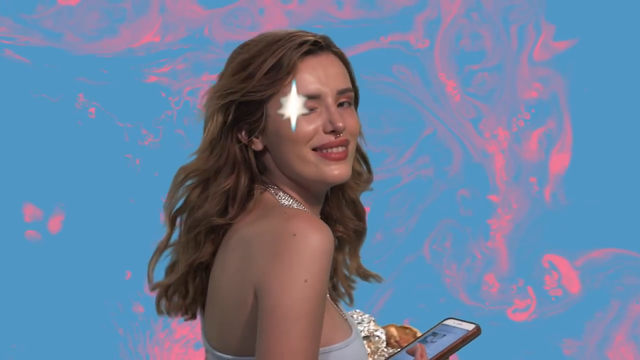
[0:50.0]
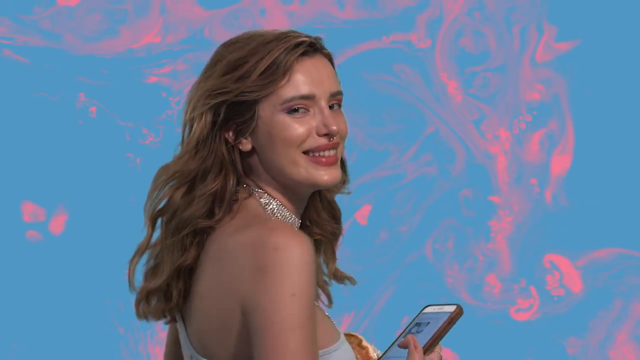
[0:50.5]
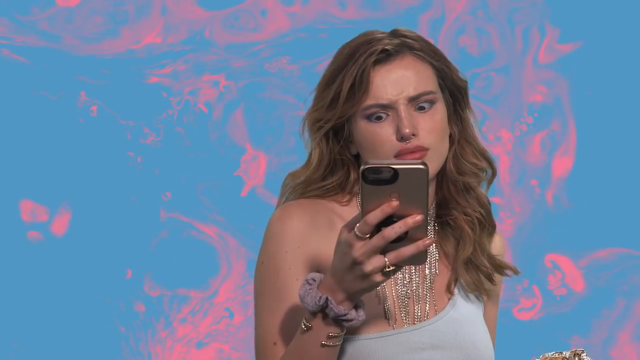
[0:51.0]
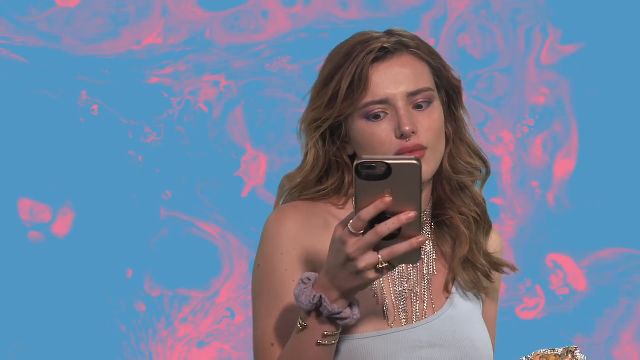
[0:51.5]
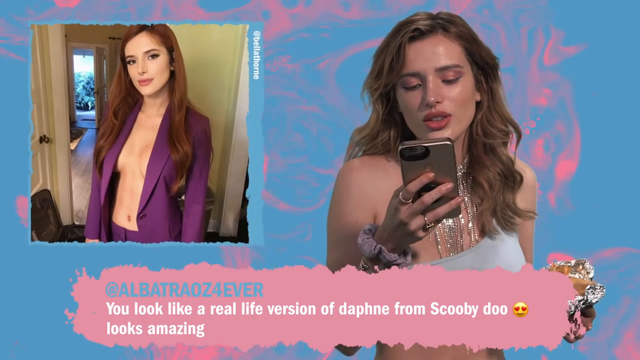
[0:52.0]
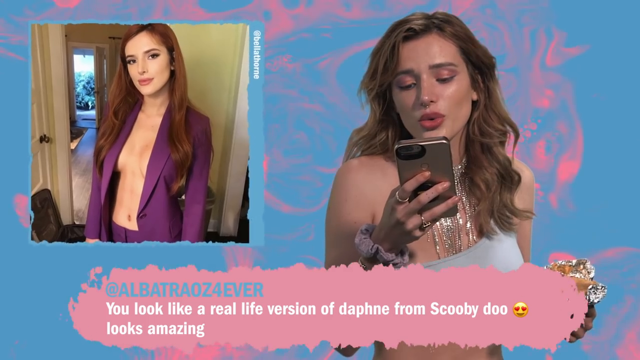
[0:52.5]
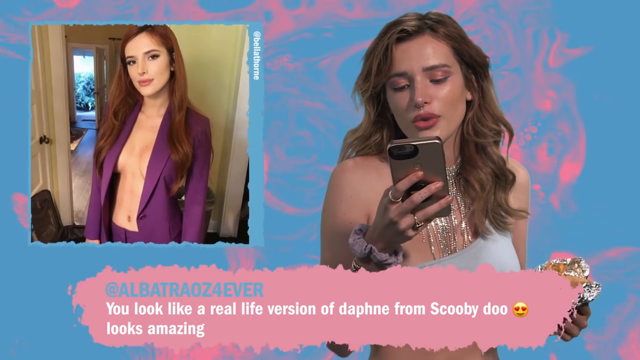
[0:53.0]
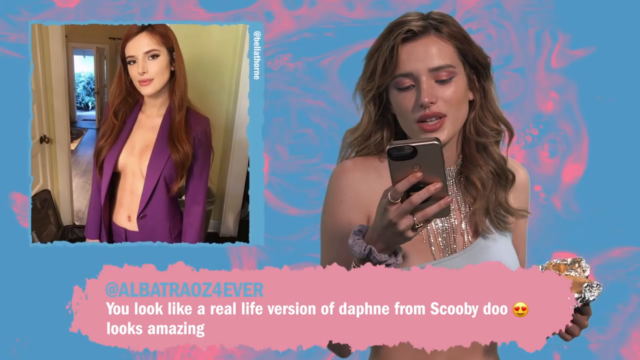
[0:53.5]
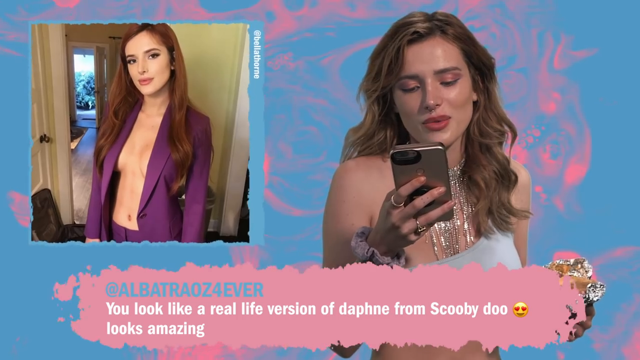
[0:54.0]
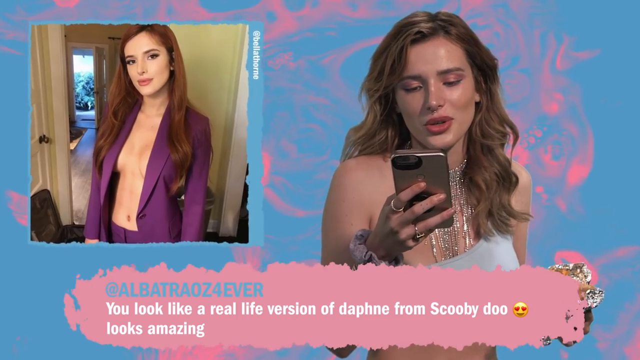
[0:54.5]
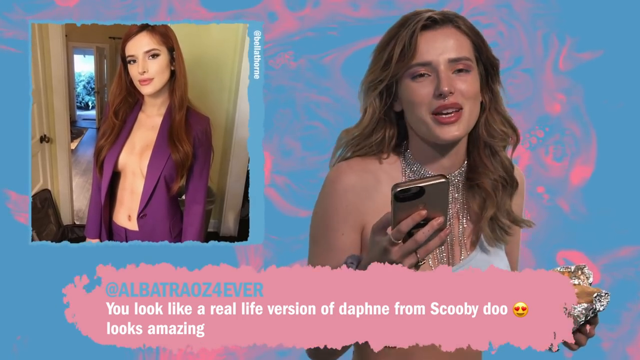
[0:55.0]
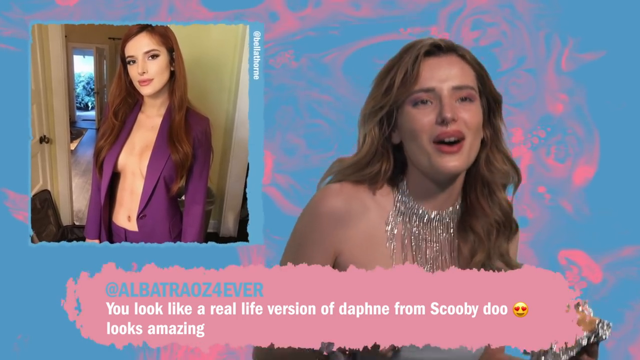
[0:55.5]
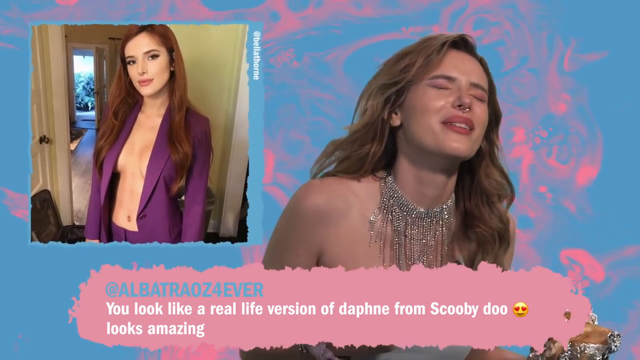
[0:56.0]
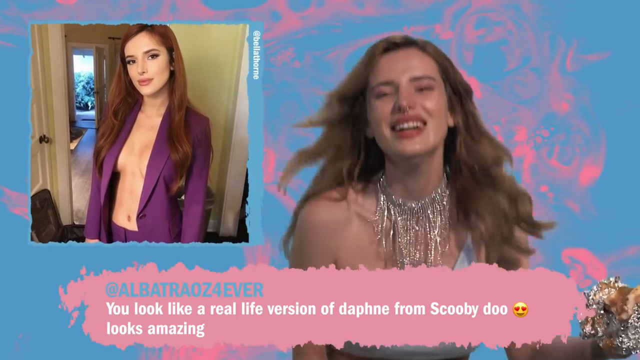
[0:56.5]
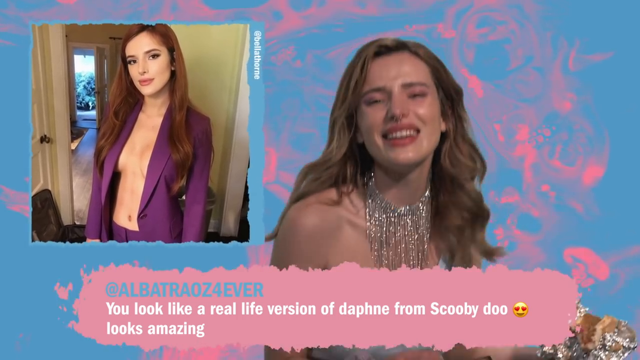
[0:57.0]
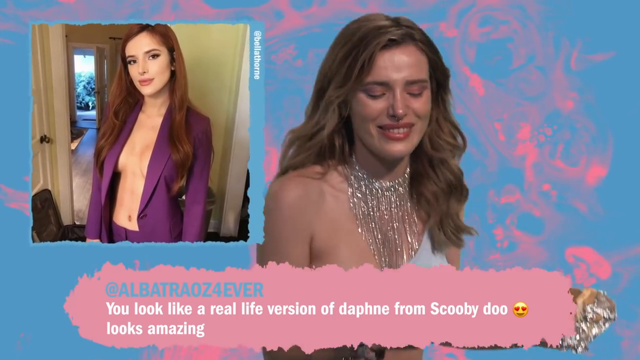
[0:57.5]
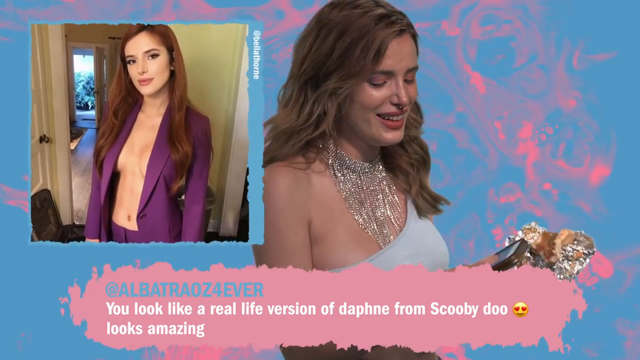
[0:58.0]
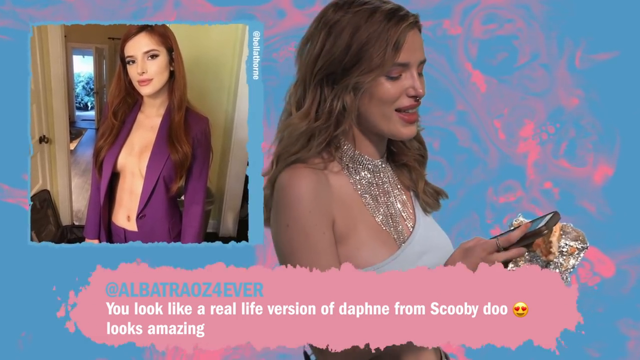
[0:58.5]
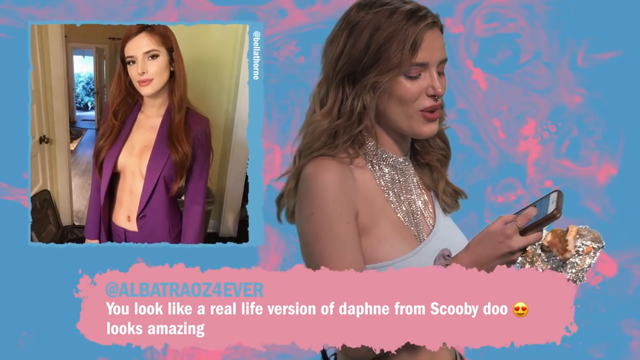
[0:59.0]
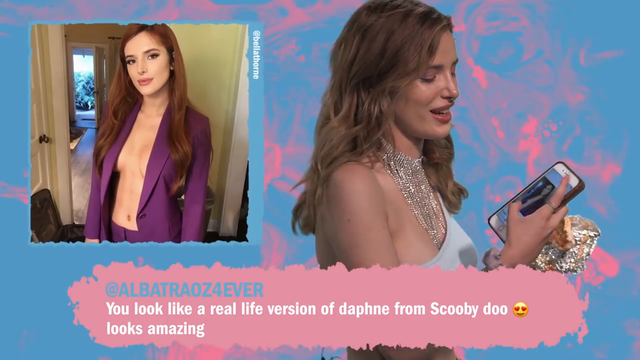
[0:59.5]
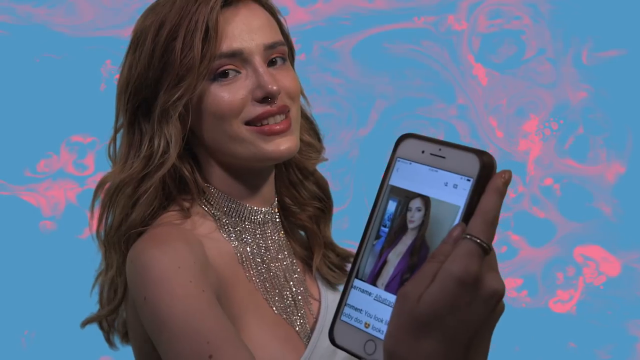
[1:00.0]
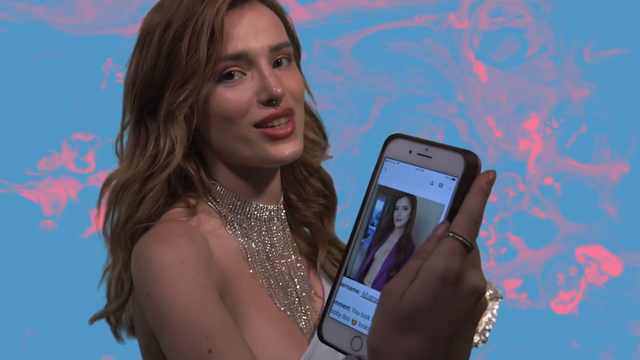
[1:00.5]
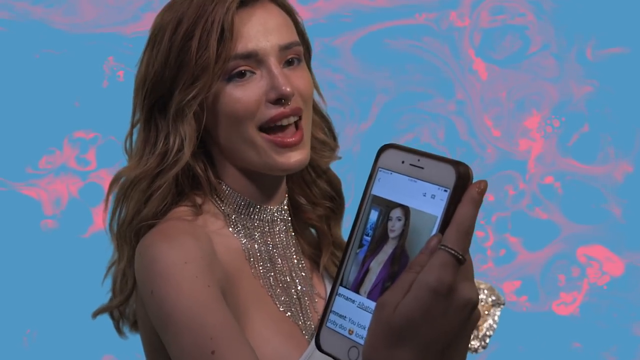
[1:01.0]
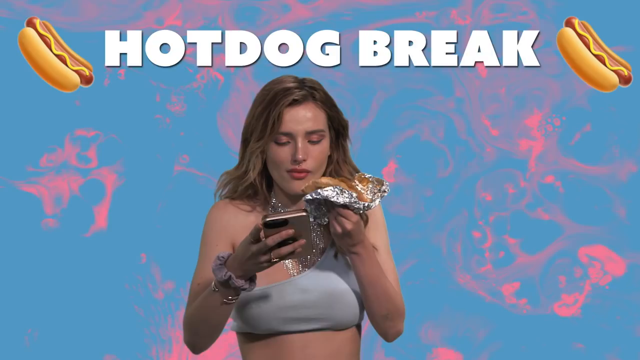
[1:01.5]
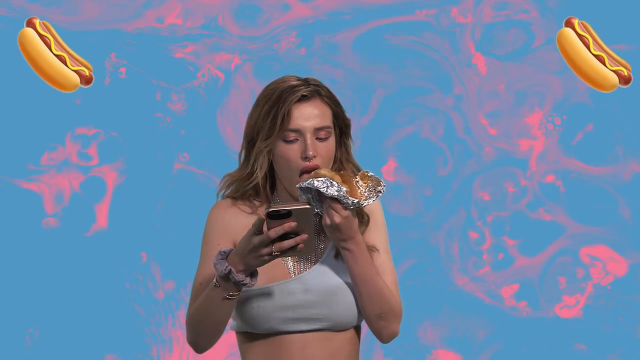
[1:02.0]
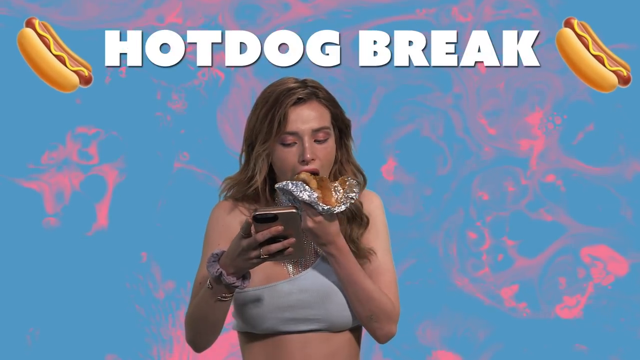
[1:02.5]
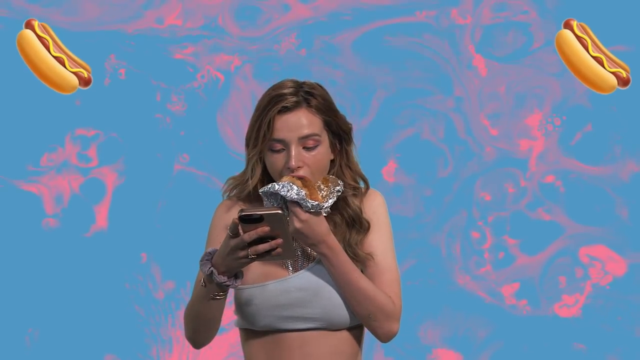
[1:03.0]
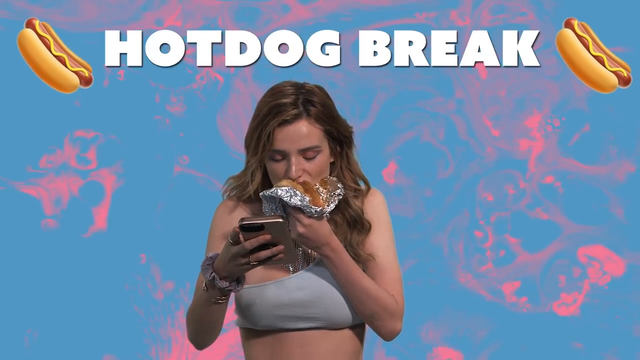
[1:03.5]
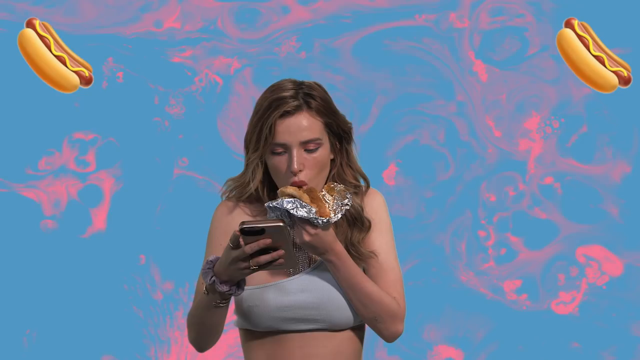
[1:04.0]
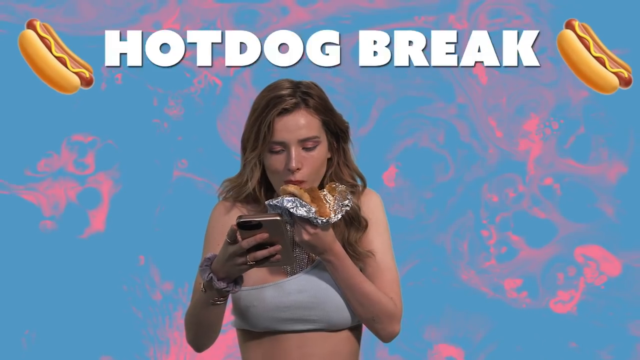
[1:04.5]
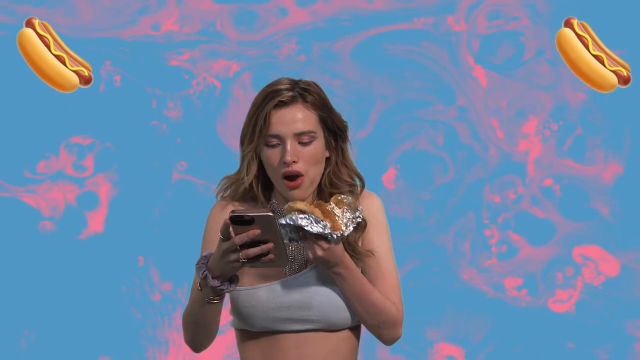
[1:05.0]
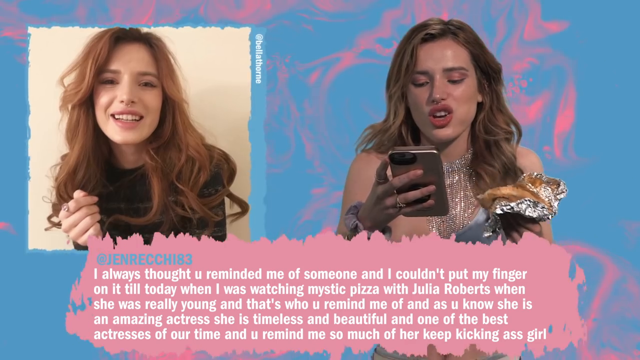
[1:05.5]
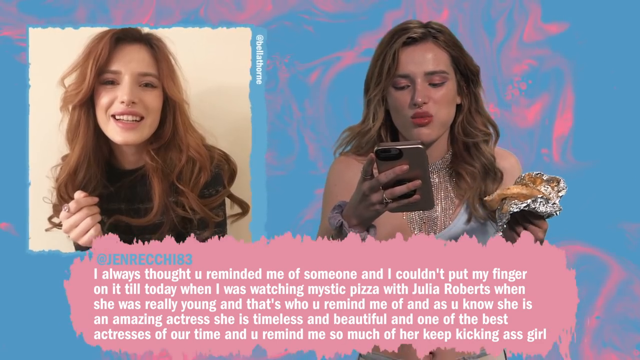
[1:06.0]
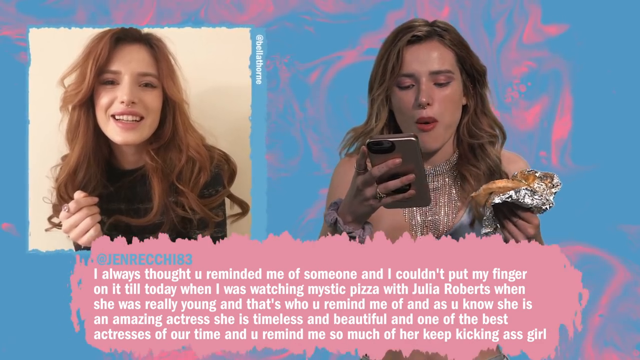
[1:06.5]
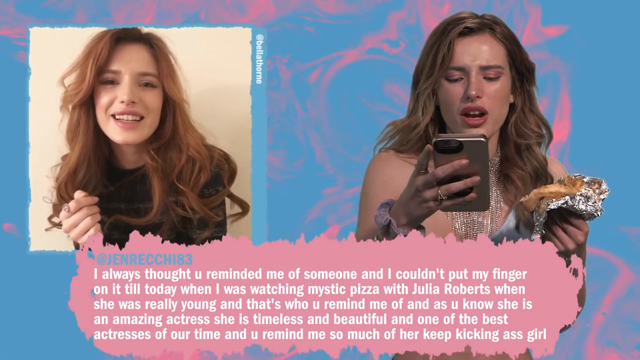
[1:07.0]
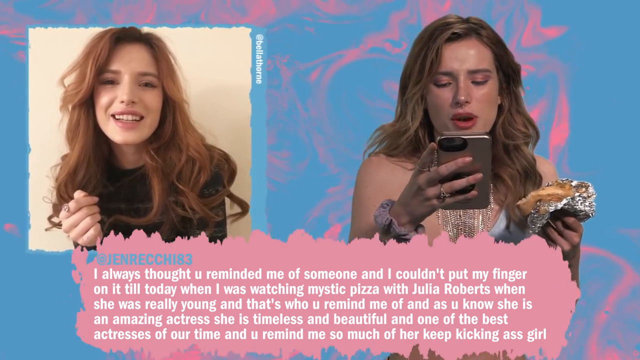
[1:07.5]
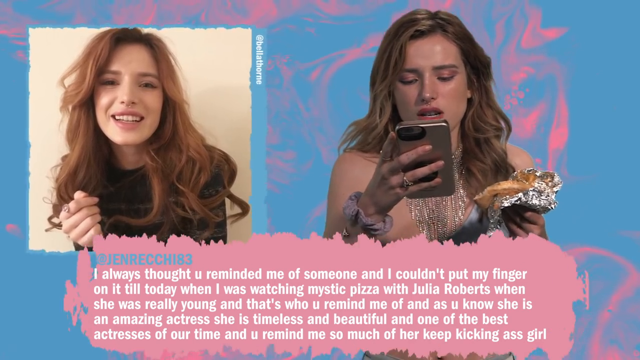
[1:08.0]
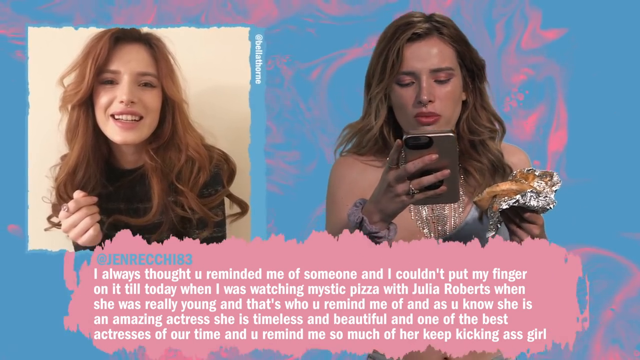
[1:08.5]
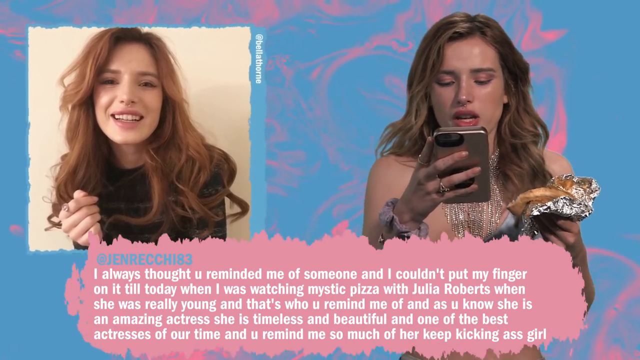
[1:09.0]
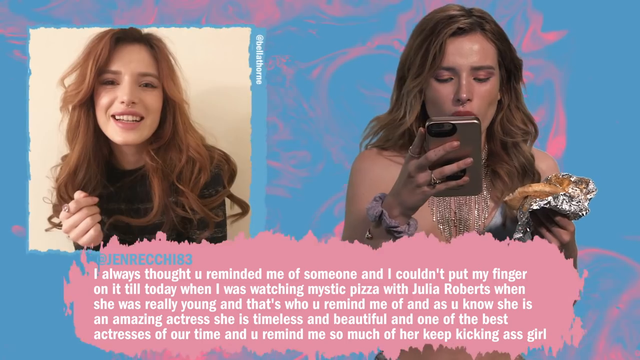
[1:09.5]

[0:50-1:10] The next photograph shows her in a purple jacket and purple pants that are a bit revealing, with makeup and done hair, in her house; an open door, the floor and light yellow walls are visible in the background. The comment says she looks like a real-life version of Daphne from Scooby-Doo. She laughs lightheartedly, seems pleased, and jumps up and down. The background stays the same, and the photograph has the same light blue outline as before. She continues eating the hot dog she holds in her left hand. She then reads another comment in which someone says she reminds them of another actress, and she appears really pleased by it.